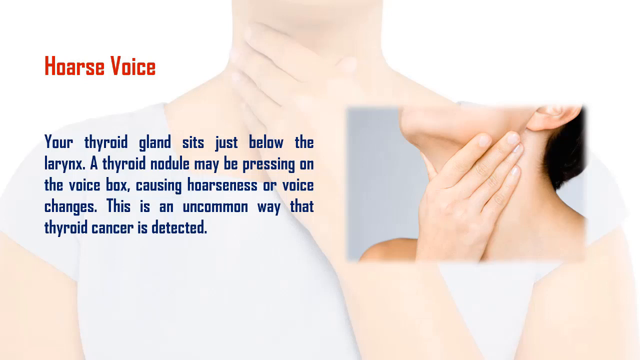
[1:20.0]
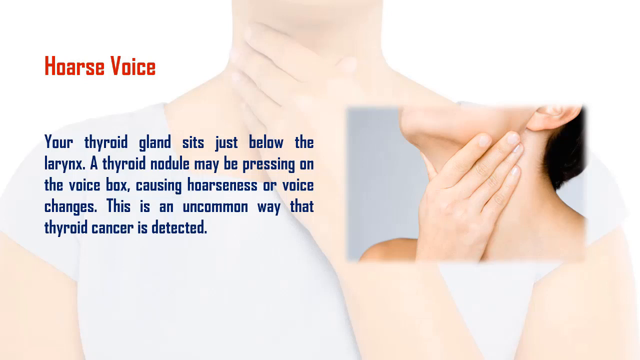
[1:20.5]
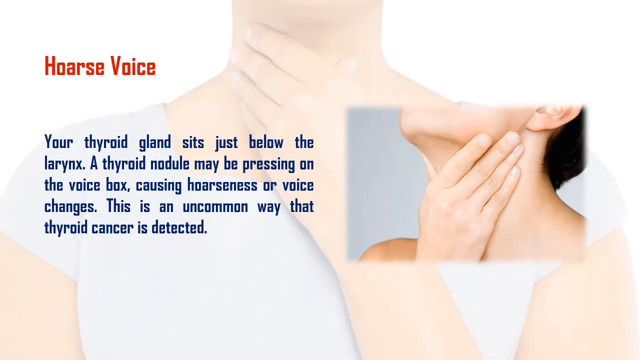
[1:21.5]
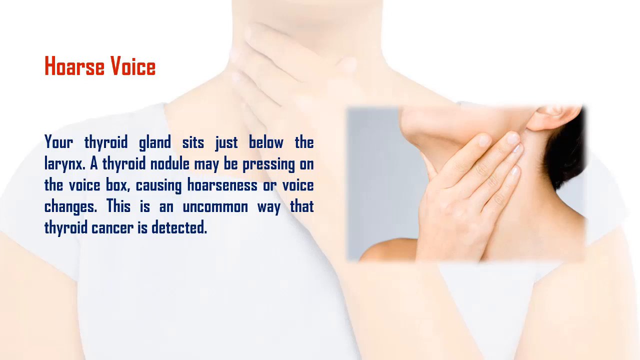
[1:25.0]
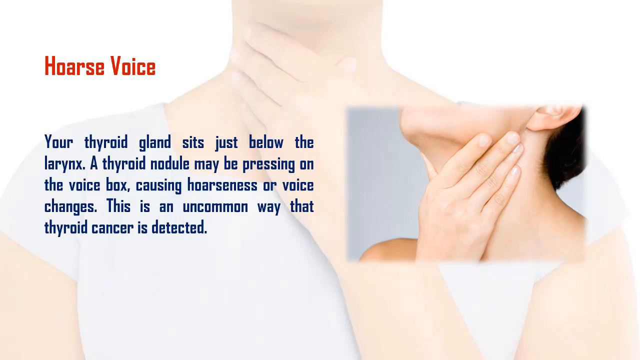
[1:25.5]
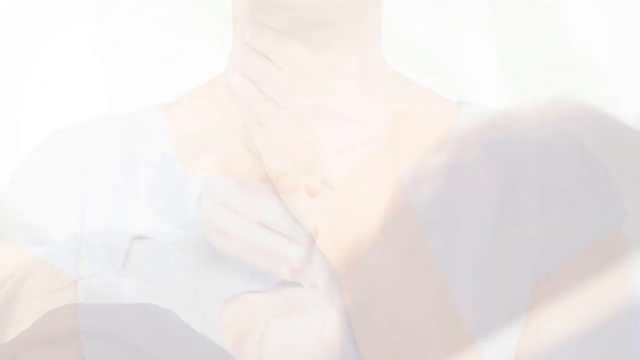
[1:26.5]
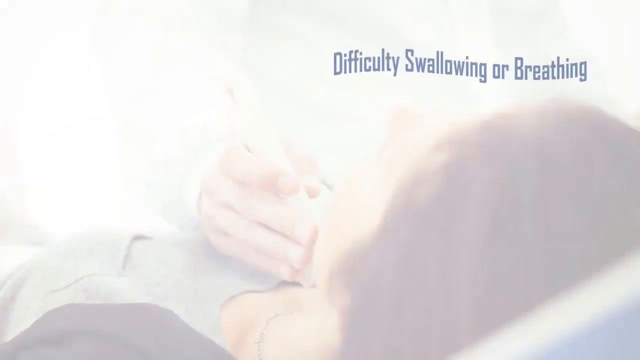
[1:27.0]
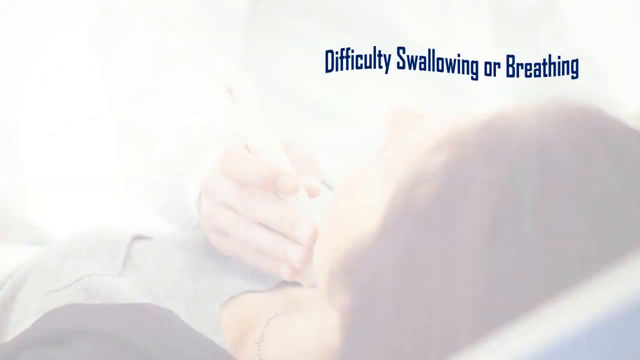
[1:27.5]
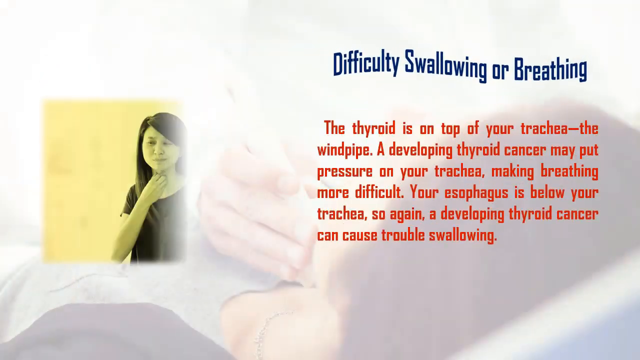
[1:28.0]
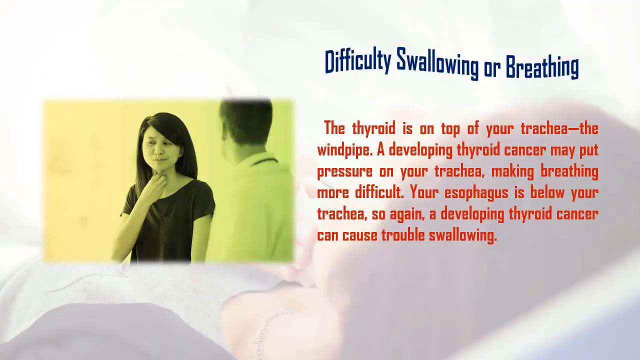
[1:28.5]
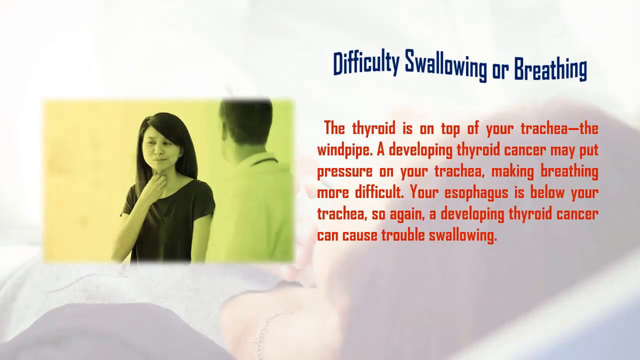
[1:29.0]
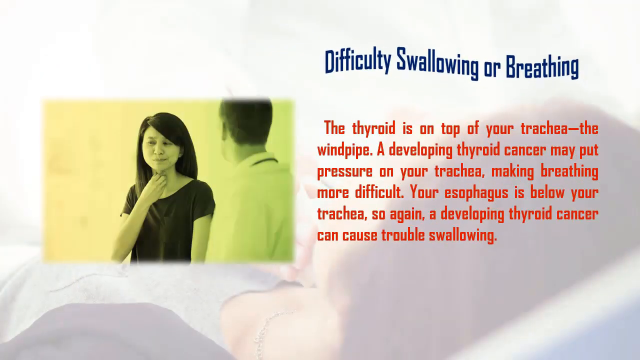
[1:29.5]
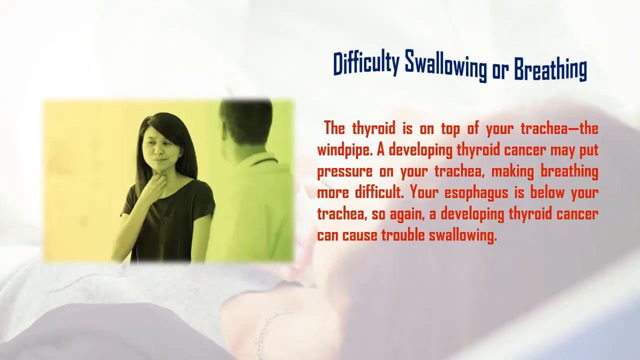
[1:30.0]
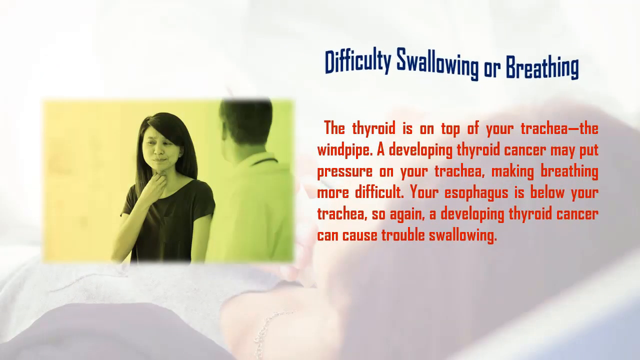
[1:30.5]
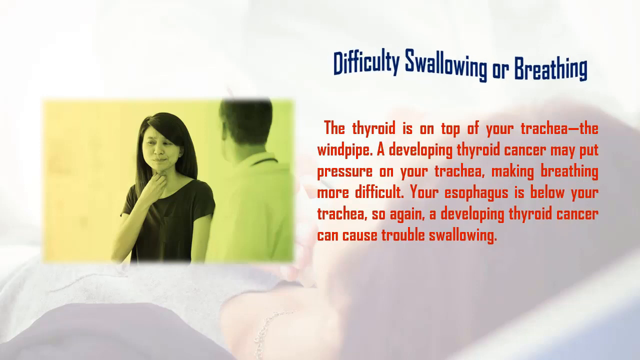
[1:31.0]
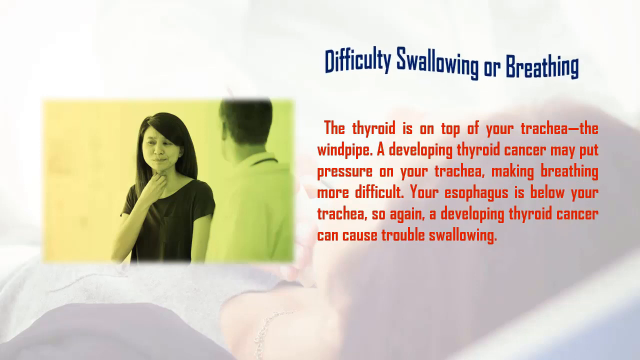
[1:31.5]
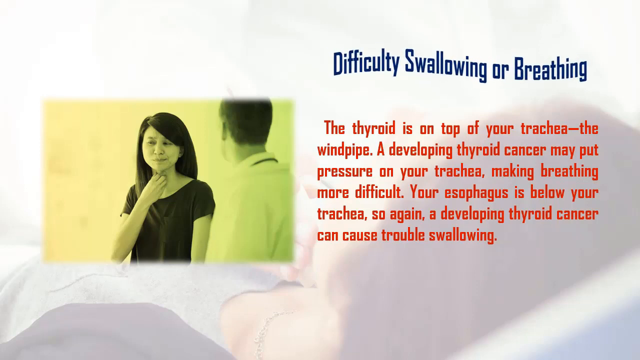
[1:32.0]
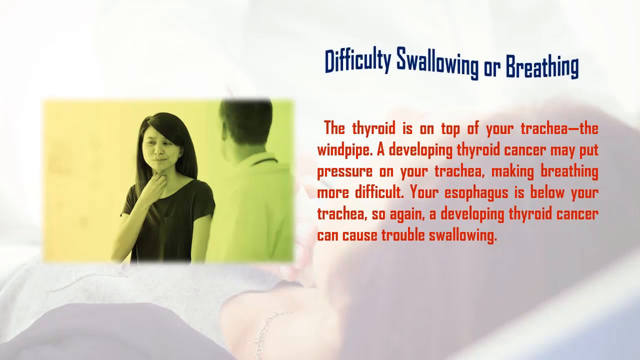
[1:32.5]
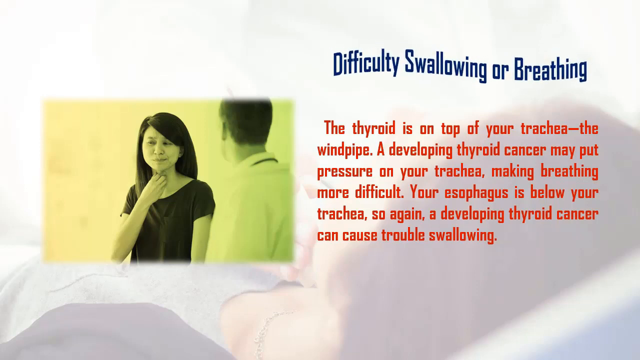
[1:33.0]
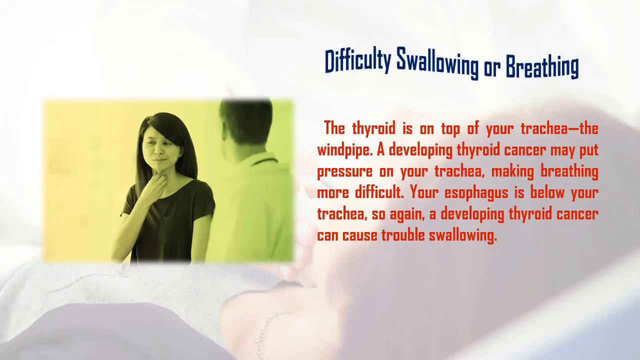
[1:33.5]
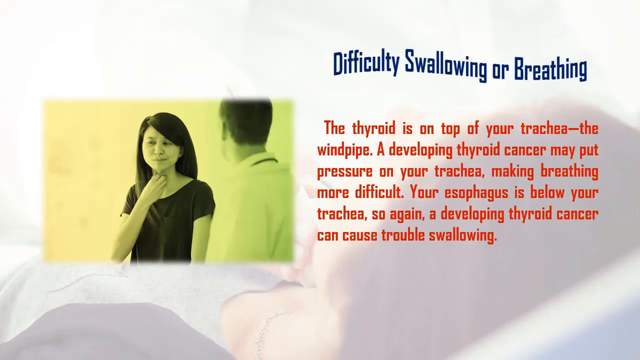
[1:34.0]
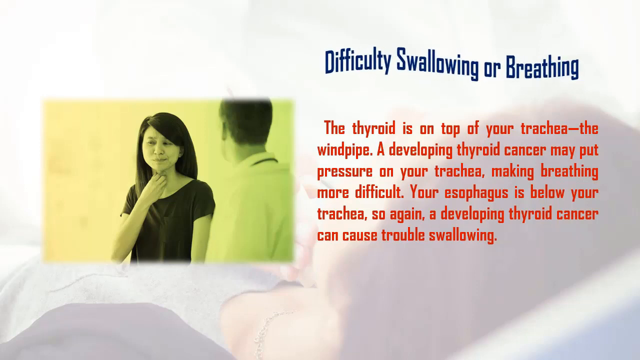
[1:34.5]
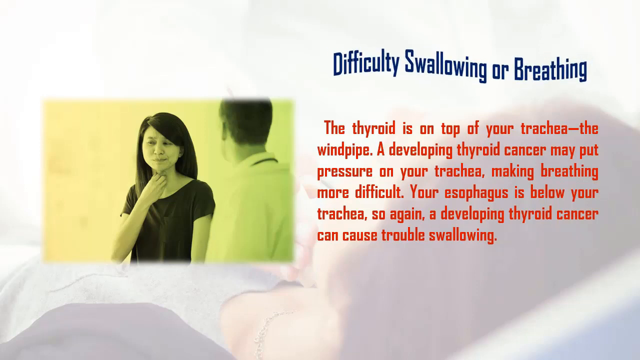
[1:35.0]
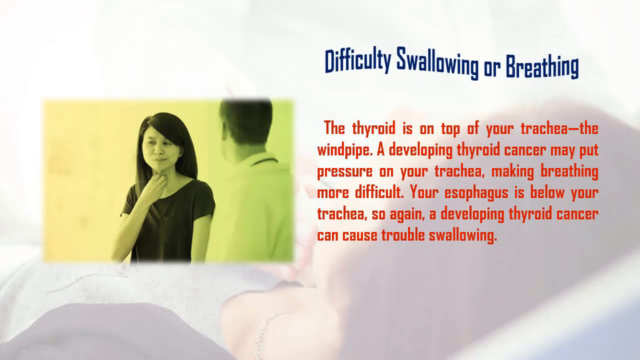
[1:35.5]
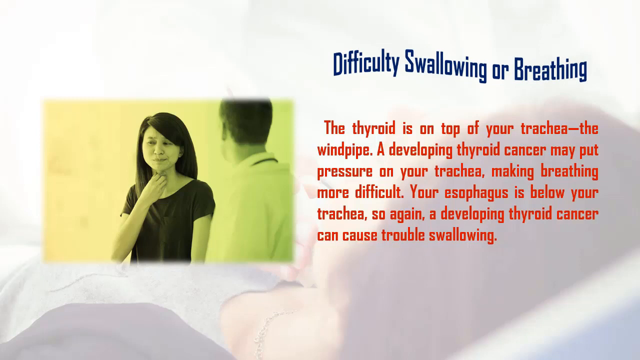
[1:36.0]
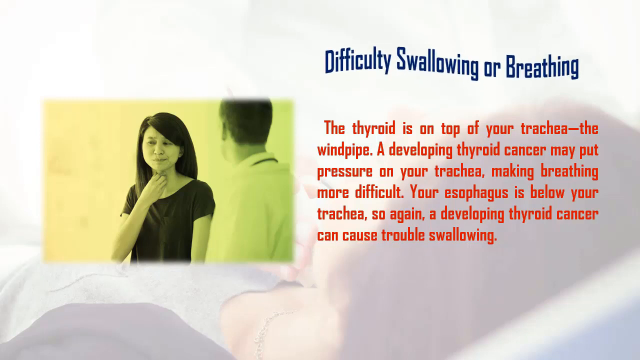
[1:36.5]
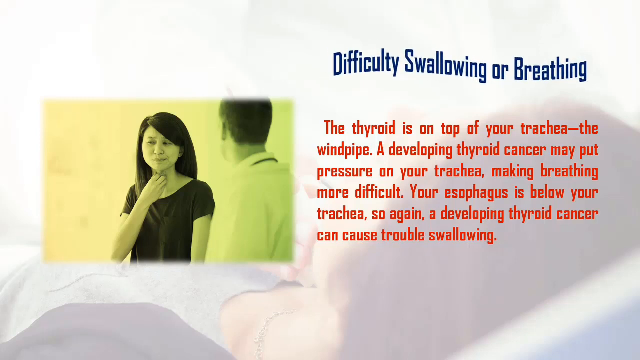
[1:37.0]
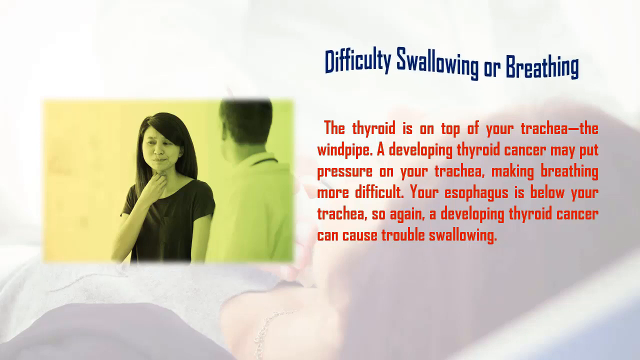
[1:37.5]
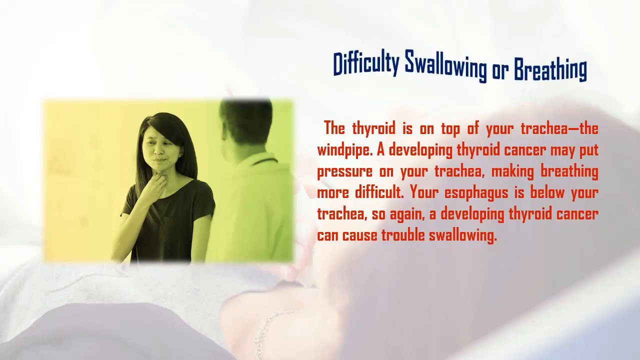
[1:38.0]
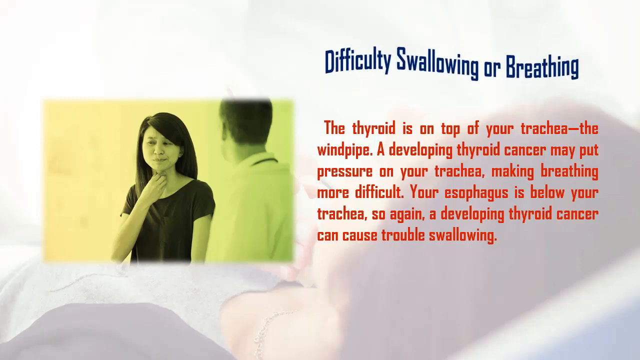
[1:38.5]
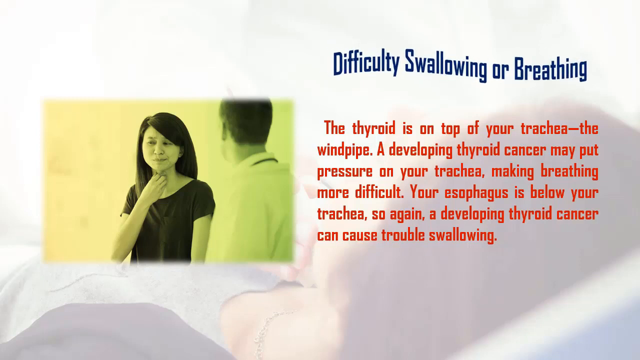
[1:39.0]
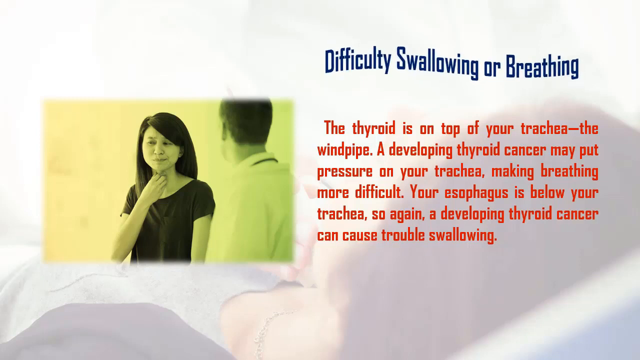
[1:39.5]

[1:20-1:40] The Disease Facts Thyroid Cancer video covers symptoms. A slide says "hoarse voice" with the text "Your thyroid gland sits just below your larynx. A thyroid nodule may be pressing on the voice box, causing hoarseness or voice changes. This is an uncommon way that thyroid cancer is detected," alongside a picture of a lady touching her own neck with her right hand. The next slide reads "Difficulty swallowing or breathing" in blue font, and in red font: "the thyroid is on top of your trachea, the windpipe. A developing thyroid cancer may put pressure on your trachea, making breathing more difficult. Your esophagus is below your trachea, so again, a developing thyroid cancer can cause trouble swallowing." To the left is an Asian lady in a dark shirt with her hair side-parted on her right side; she is touching her neck with her right hand and does not look very happy. A doctor is looking at her from not very close; only his back is visible, not his face. He wears a white coat and has short dark hair.